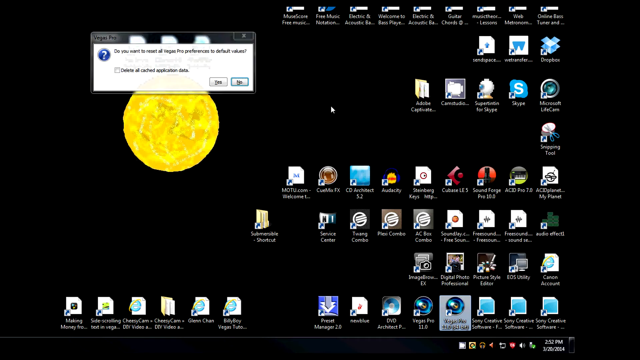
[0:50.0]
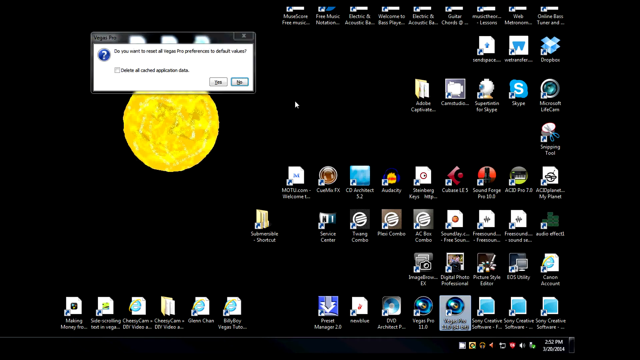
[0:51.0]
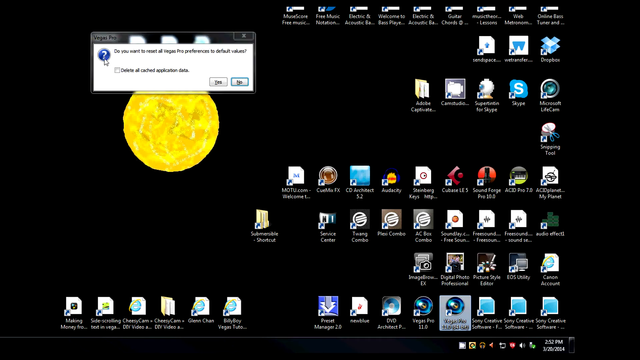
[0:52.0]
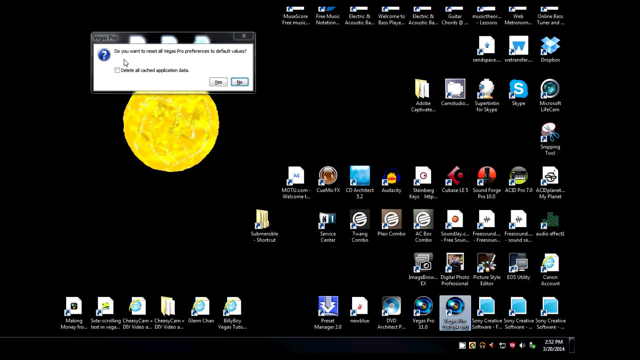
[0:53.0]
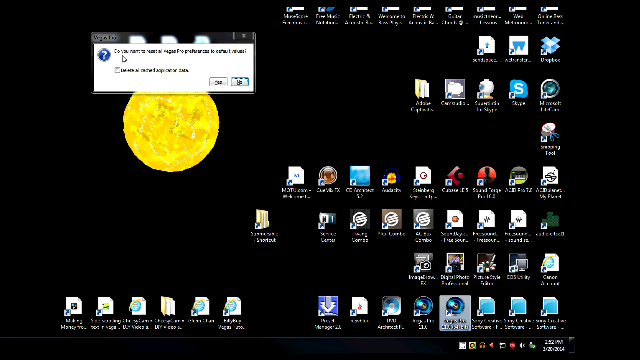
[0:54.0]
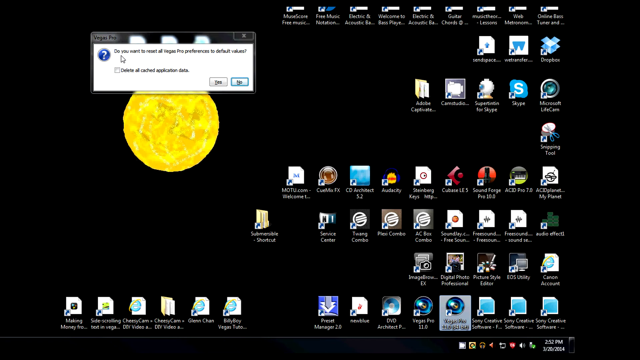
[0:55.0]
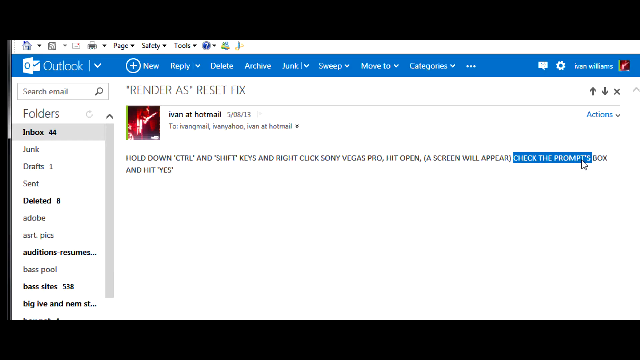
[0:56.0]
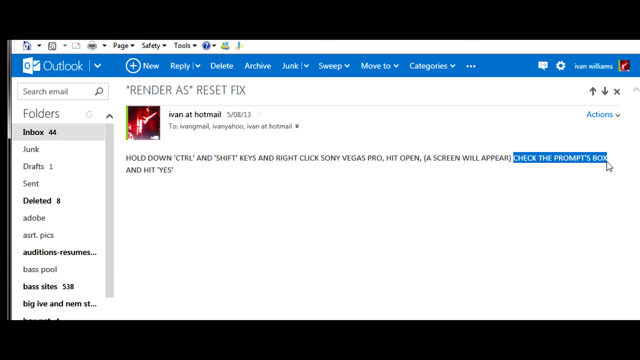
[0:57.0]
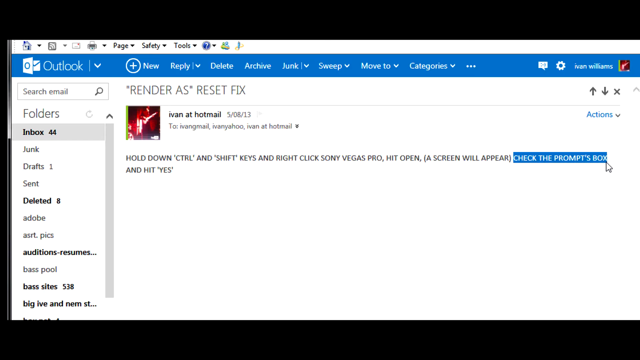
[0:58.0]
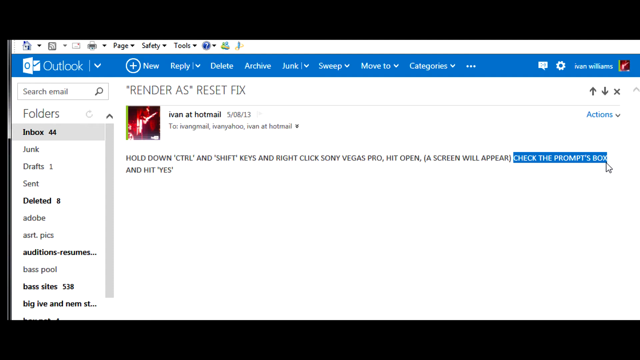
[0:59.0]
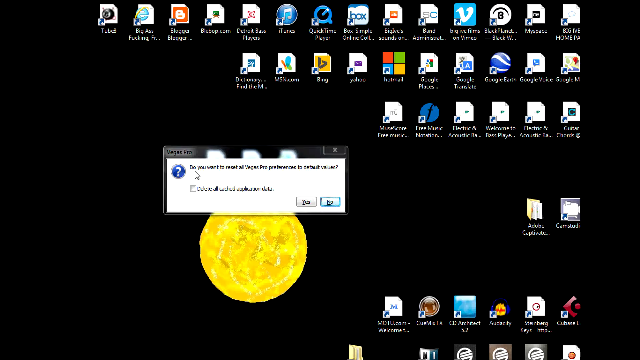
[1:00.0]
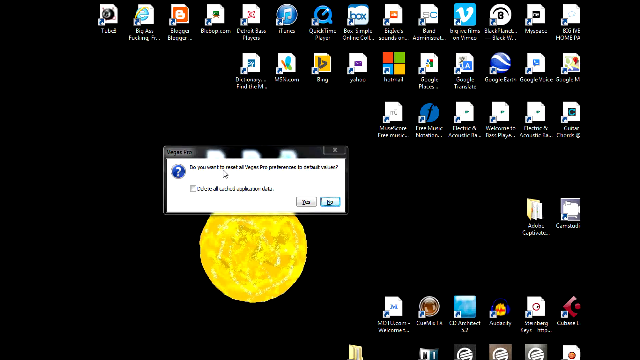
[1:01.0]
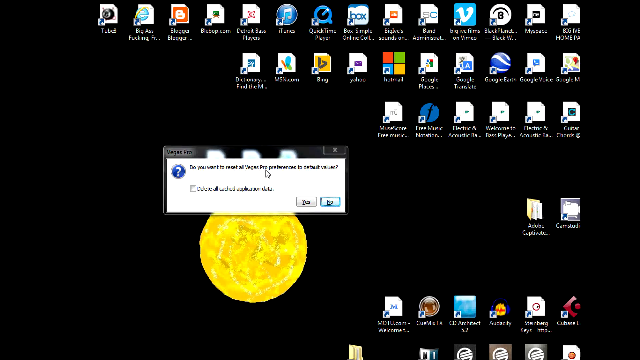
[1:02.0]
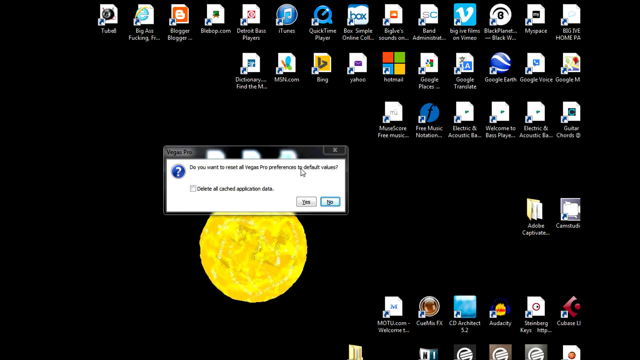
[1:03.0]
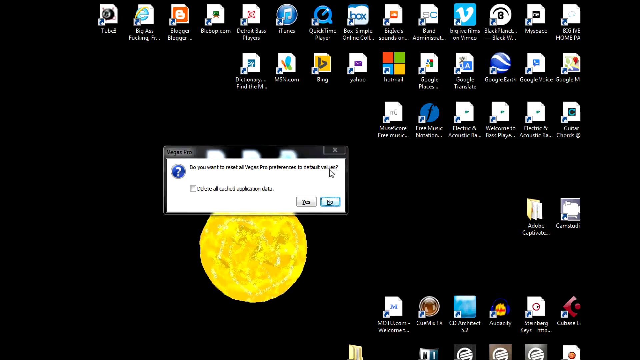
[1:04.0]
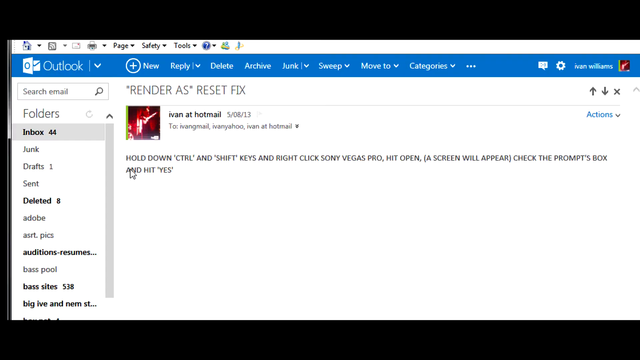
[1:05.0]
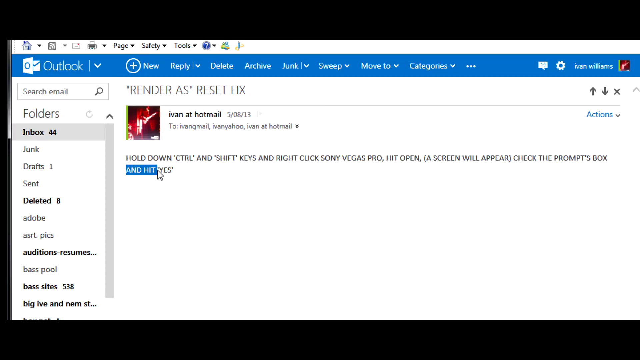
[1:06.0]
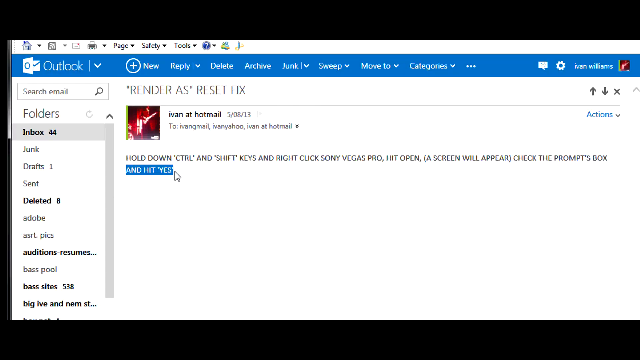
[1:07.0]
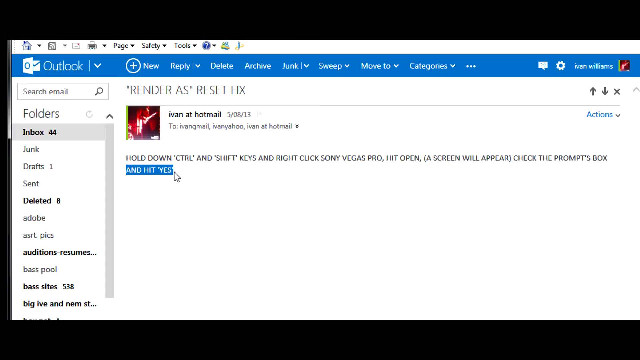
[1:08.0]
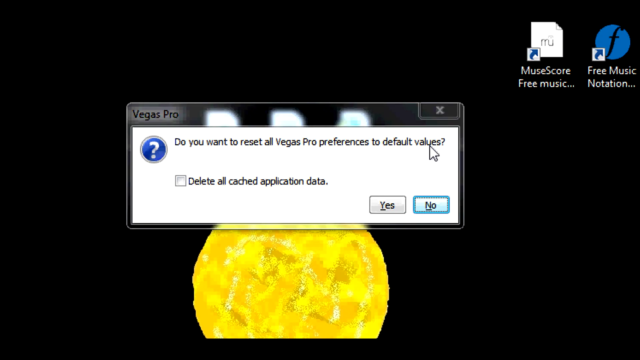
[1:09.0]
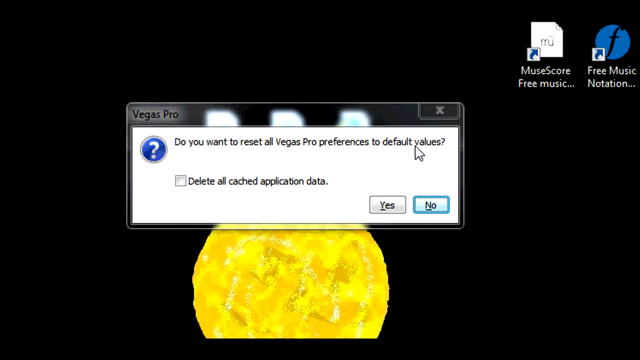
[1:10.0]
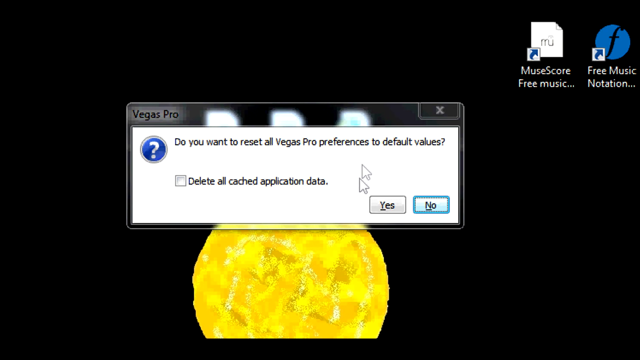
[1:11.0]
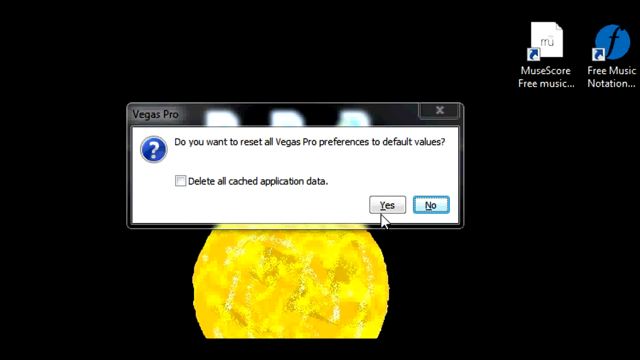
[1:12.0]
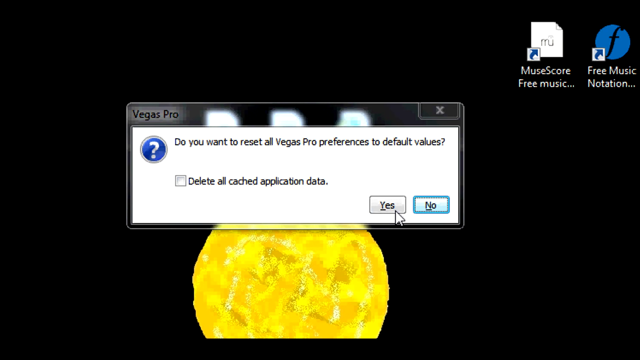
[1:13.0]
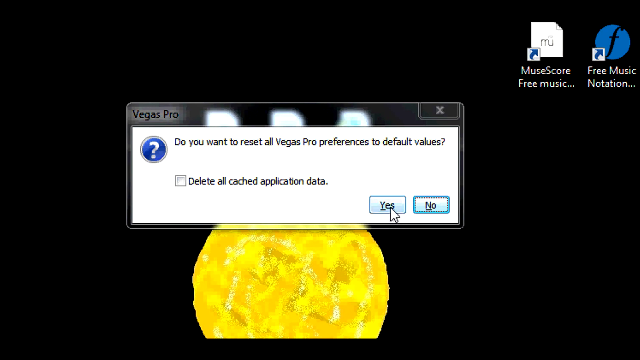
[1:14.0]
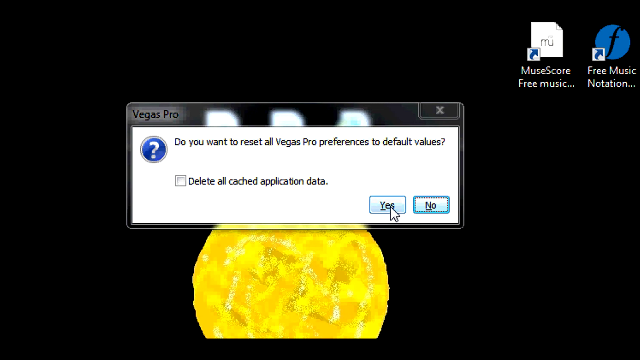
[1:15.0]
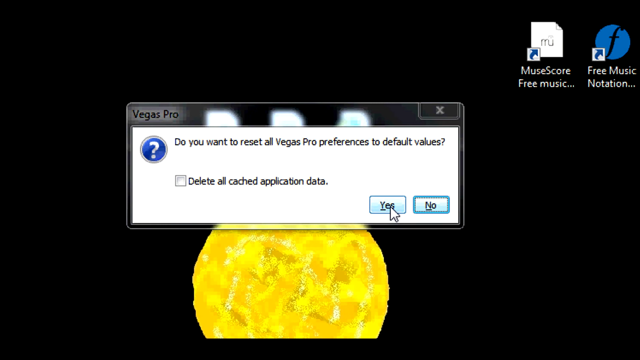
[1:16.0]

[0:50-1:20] The pop-up window reads "do you want to reset all Vegas Pro preferences to default values?" The screen goes back to the Outlook email, where the cursor highlights the words "check the prompts box." The view returns to the desktop, where the cursor seems to be reading the prompt inside the pop-up window. Then it returns to the email in Outlook, which says "and hit 'Yes'." Next comes a close-up view of the Vegas Pro pop-up window, where the person apparently hovers the cursor over "Yes." There are two buttons, "Yes" and "No," and a check box reading "delete all cached application data" that is empty. A white question mark inside a blue circle is at the top left of the pop-up window, directly below the Vegas Pro text.